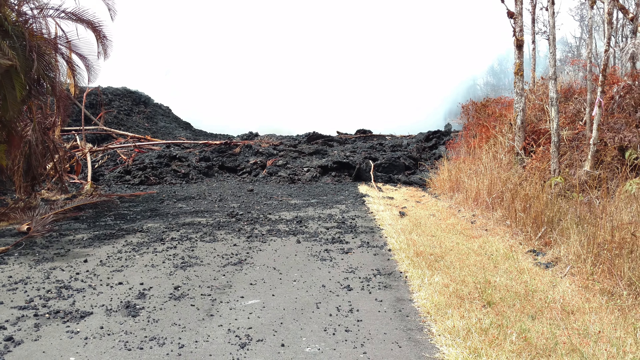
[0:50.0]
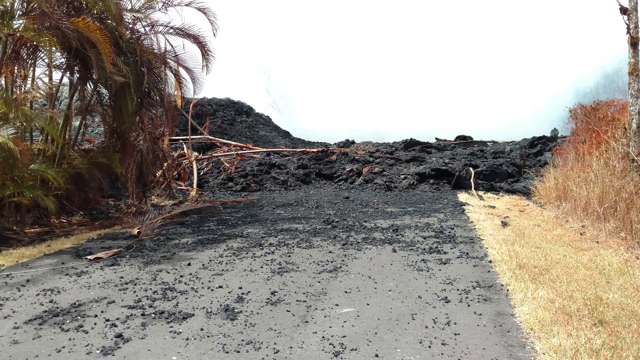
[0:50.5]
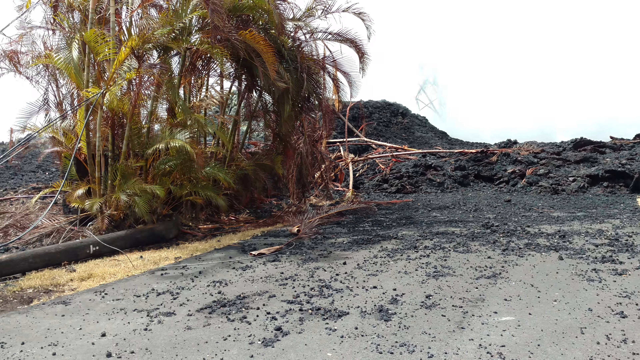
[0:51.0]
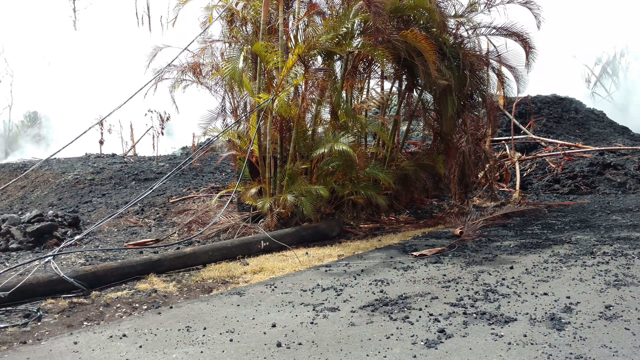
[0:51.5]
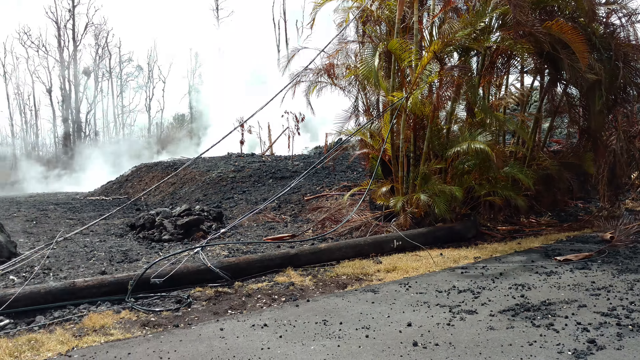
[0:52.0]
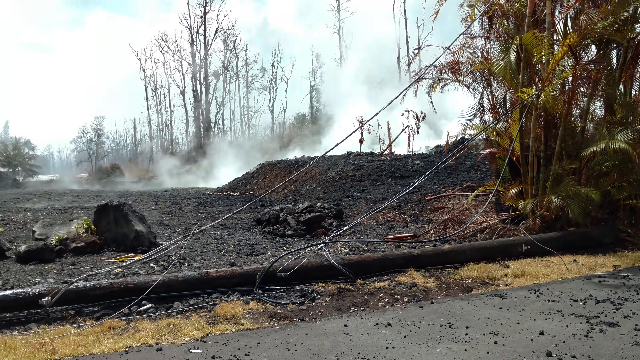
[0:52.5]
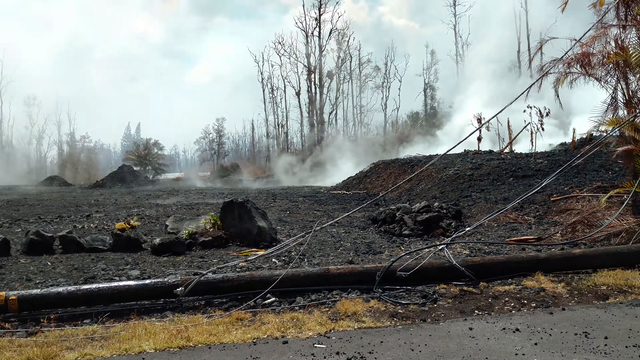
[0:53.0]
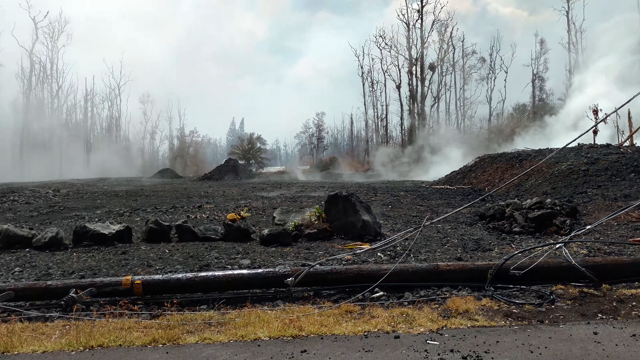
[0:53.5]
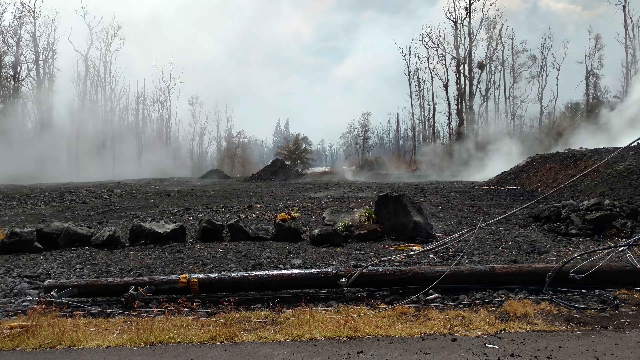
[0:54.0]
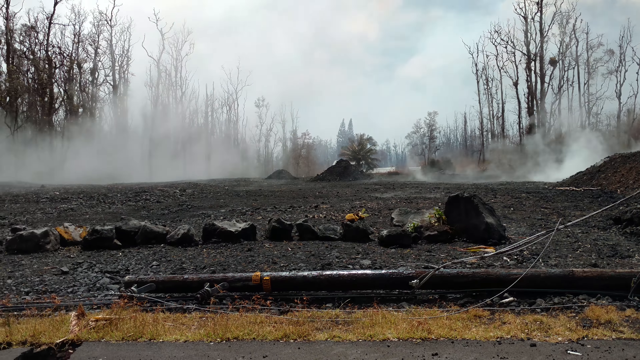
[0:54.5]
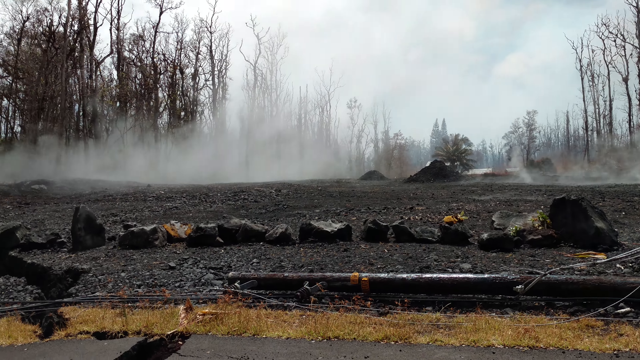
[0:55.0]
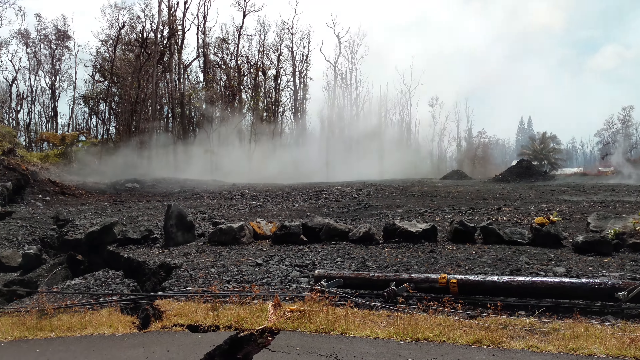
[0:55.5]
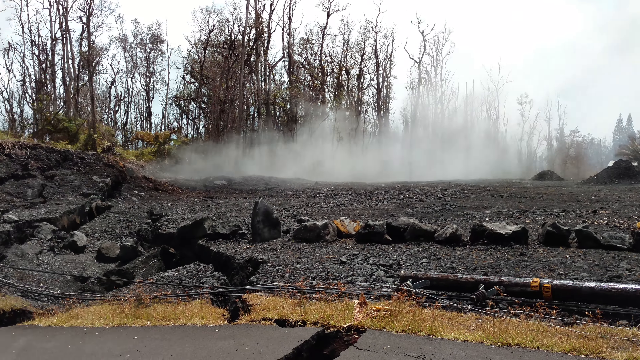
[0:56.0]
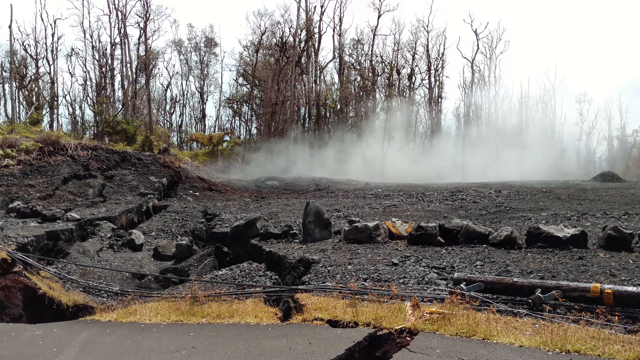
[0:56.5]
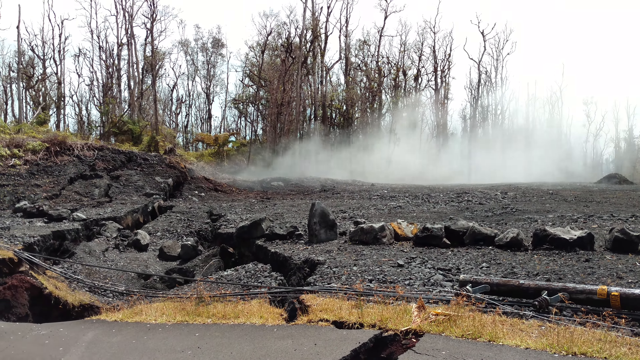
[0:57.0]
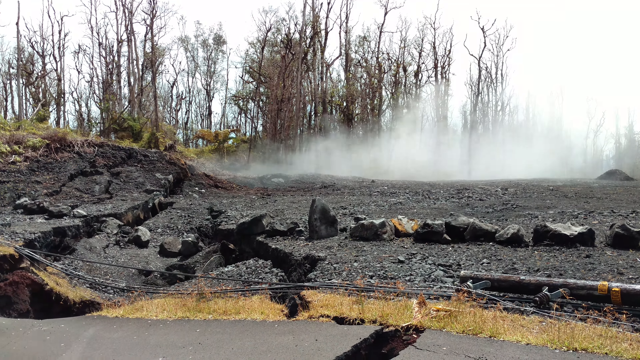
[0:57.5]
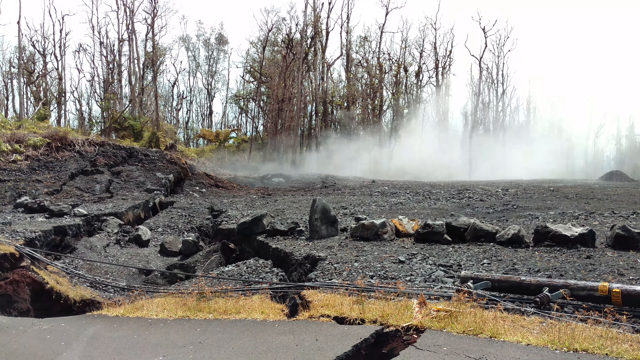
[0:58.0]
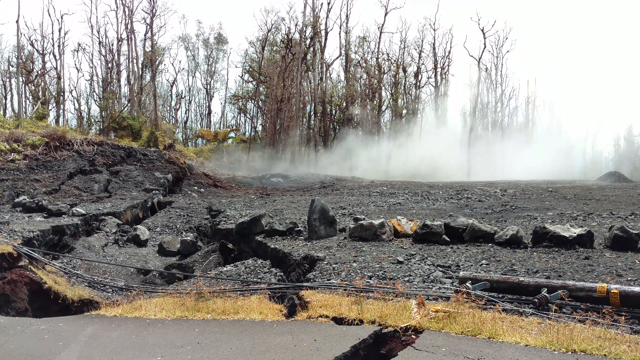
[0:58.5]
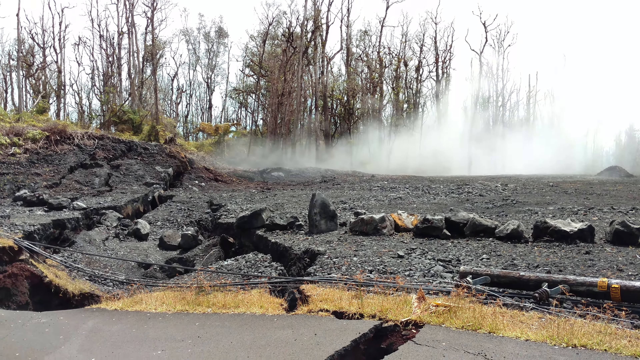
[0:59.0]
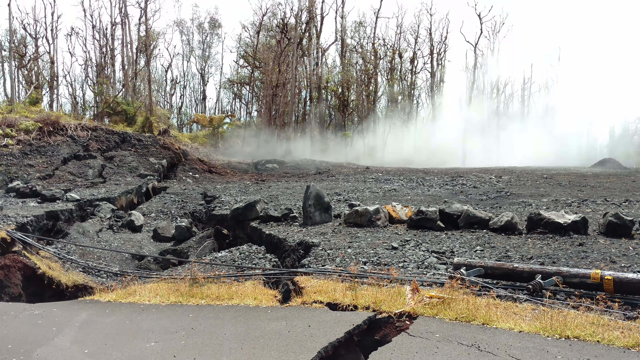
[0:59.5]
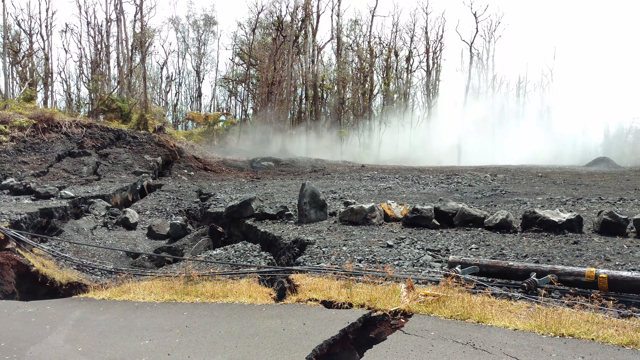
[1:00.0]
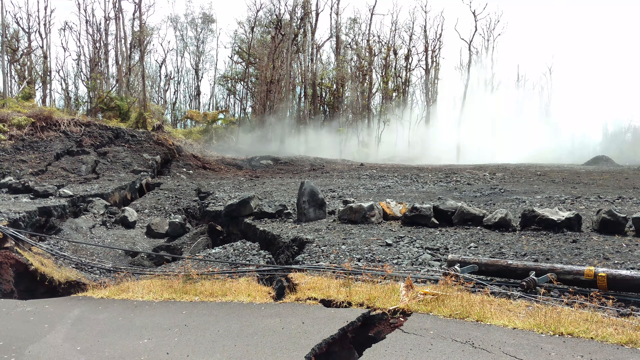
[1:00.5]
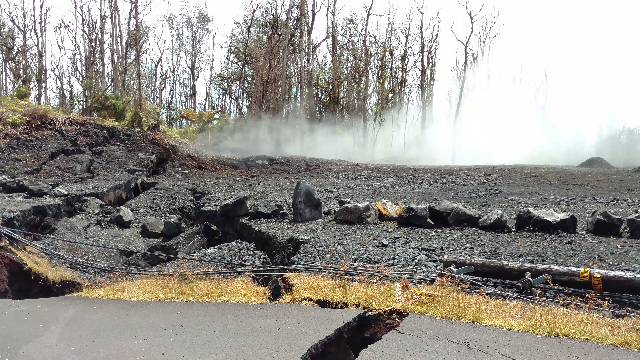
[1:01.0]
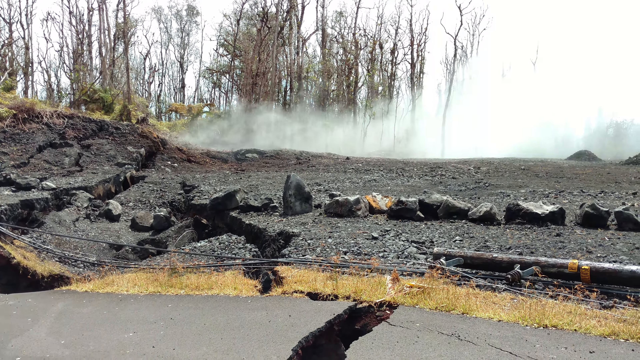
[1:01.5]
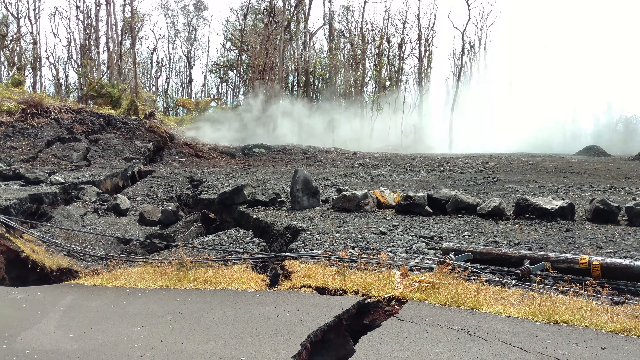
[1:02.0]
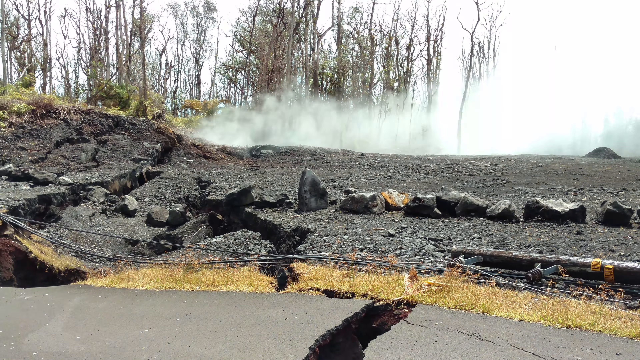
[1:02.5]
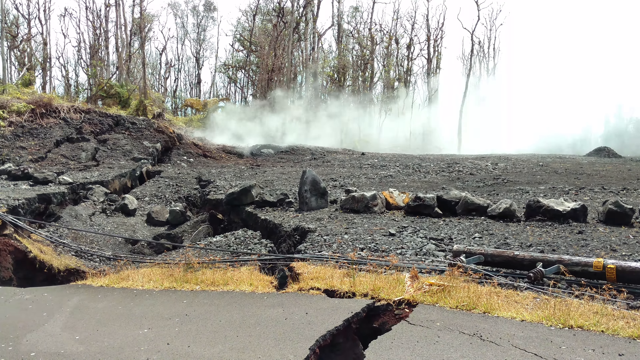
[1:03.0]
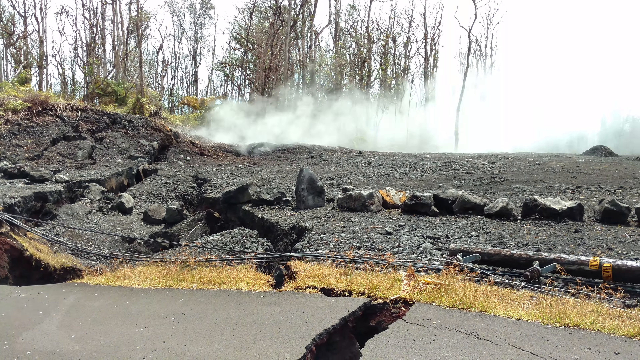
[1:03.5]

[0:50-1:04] The camera moves toward the left. As it scrolls past, one section that survived the fire comes into view: a bunch of palm trees that still look okay and are not badly burnt. After that, everything else is burnt beyond repair, and this section of the forest is completely gone. The soil is black and gray, and smoke is blowing all over. The area looks very dry and rocky.